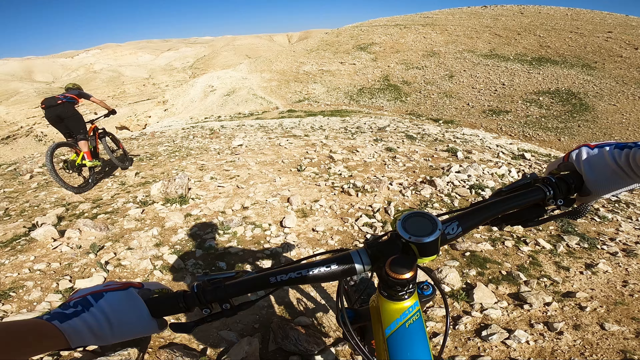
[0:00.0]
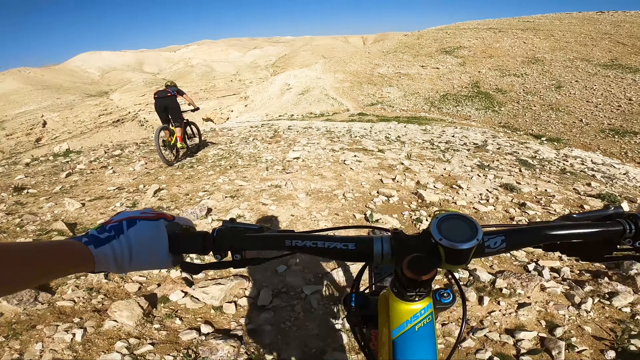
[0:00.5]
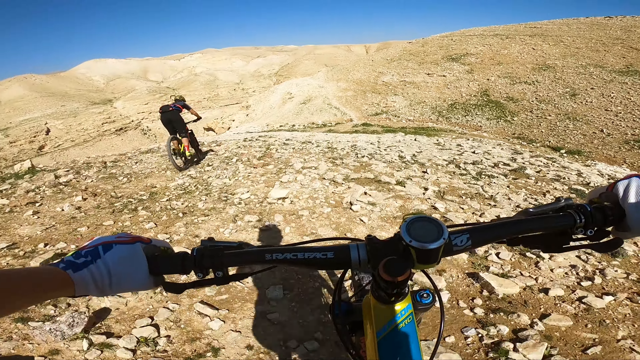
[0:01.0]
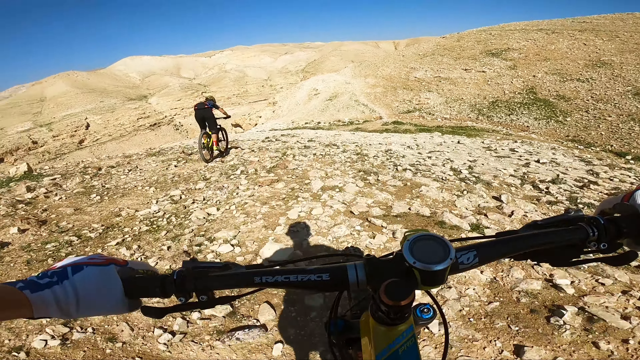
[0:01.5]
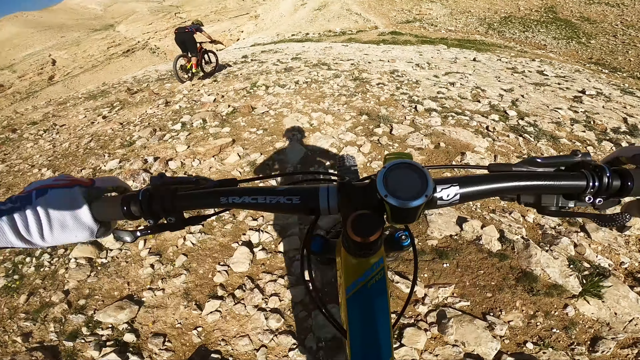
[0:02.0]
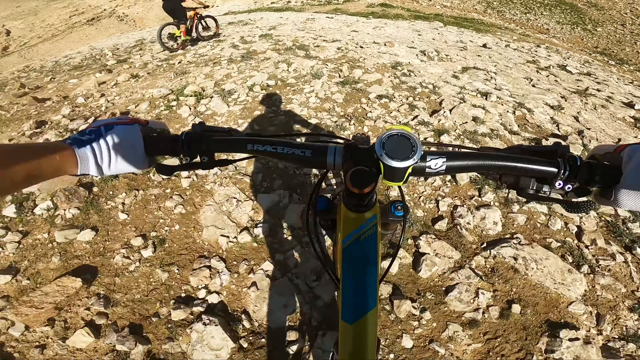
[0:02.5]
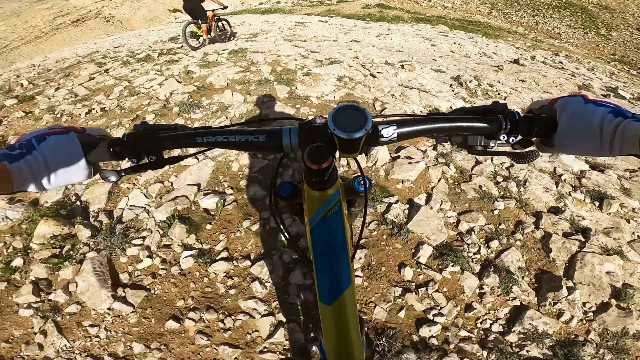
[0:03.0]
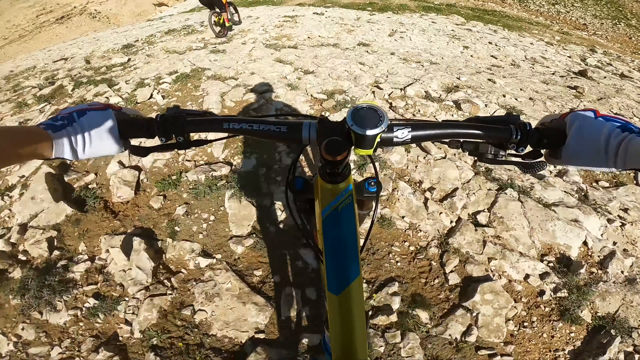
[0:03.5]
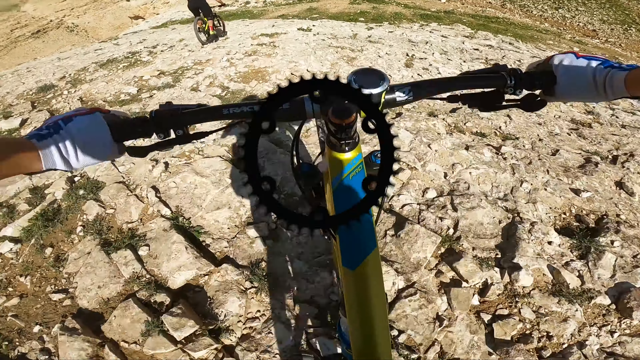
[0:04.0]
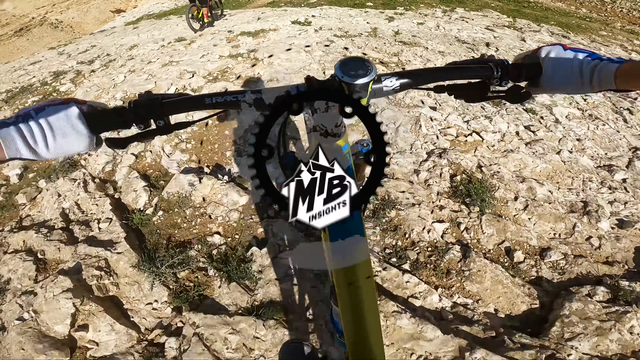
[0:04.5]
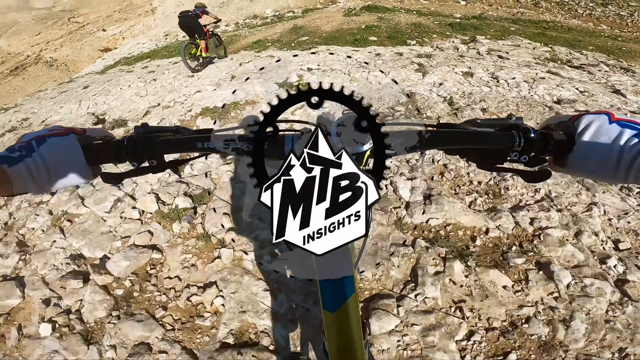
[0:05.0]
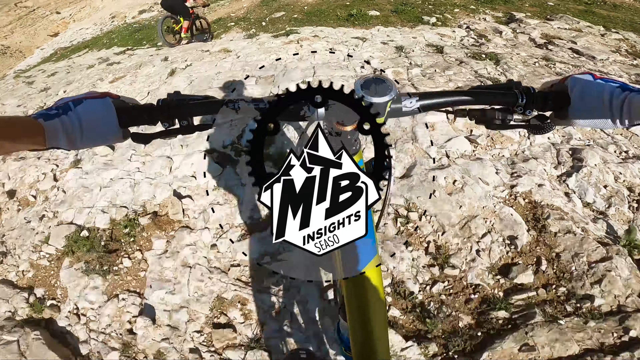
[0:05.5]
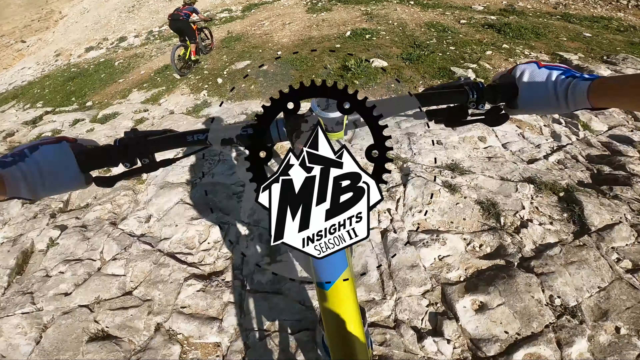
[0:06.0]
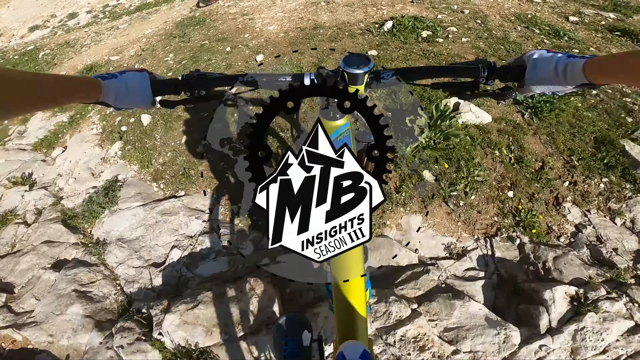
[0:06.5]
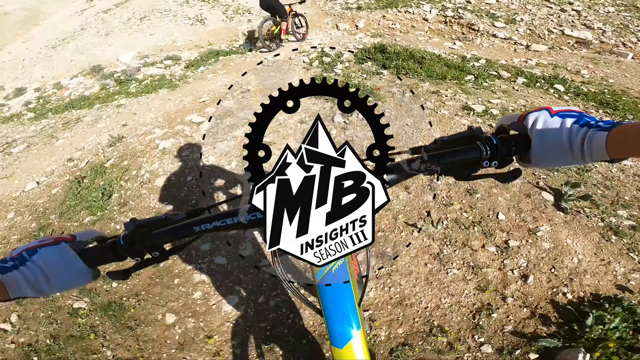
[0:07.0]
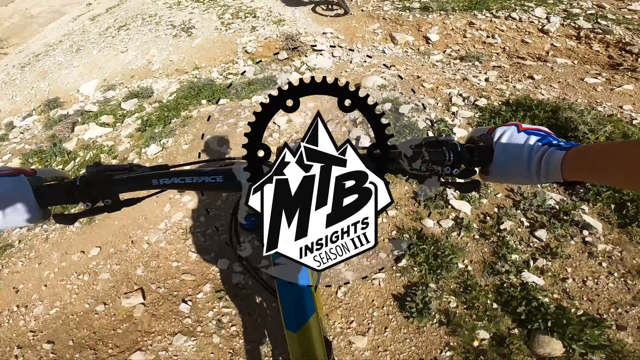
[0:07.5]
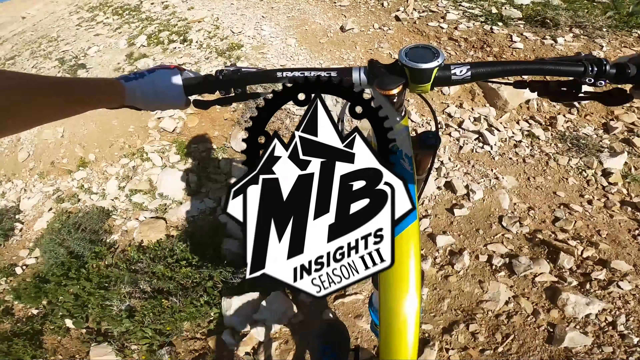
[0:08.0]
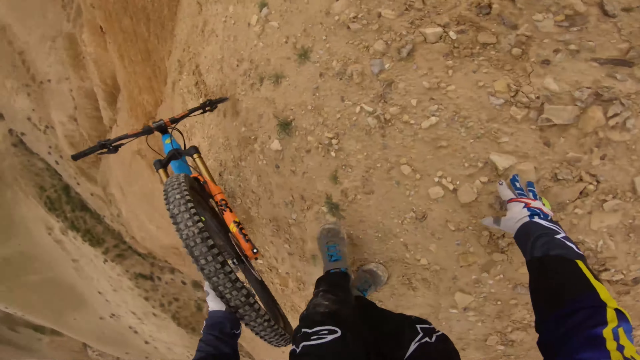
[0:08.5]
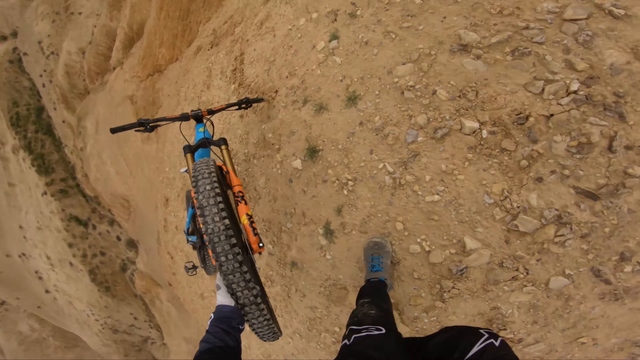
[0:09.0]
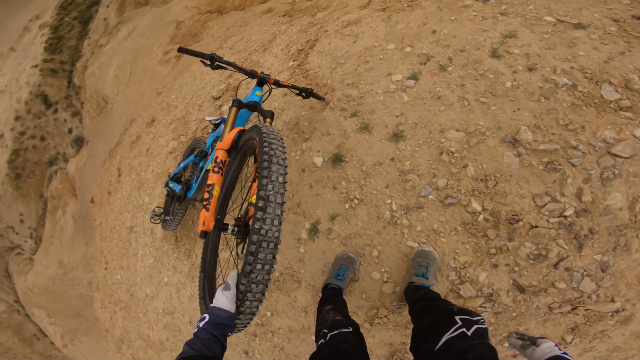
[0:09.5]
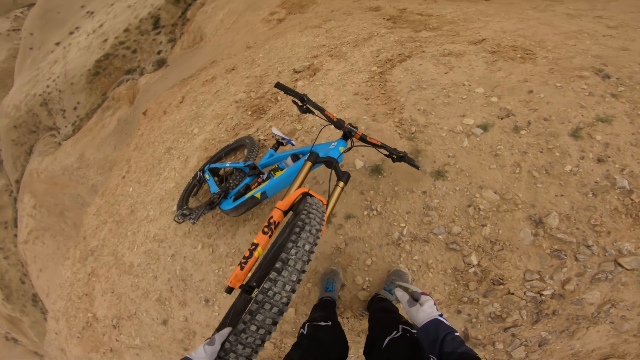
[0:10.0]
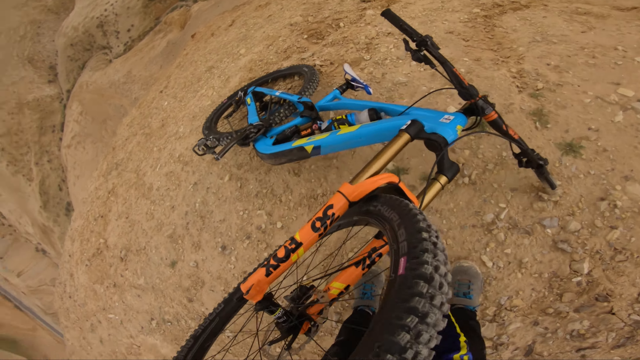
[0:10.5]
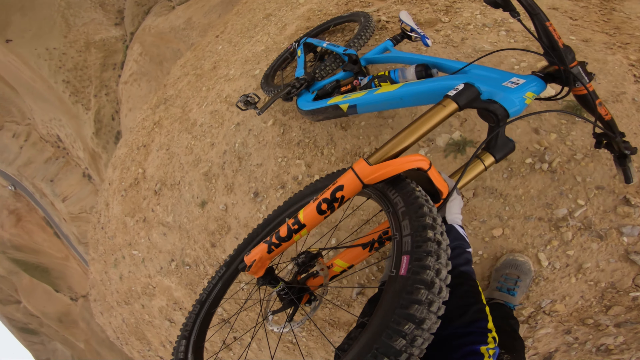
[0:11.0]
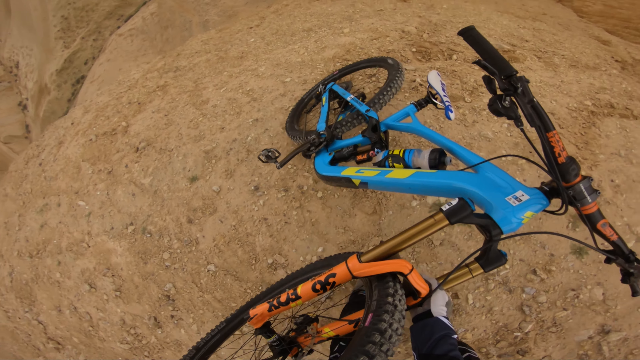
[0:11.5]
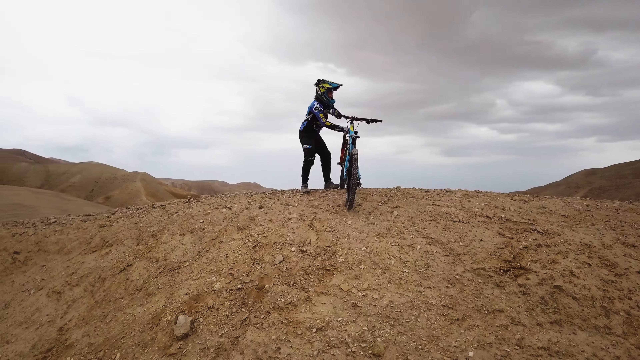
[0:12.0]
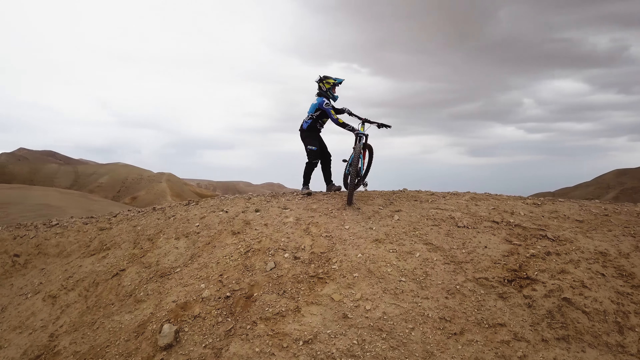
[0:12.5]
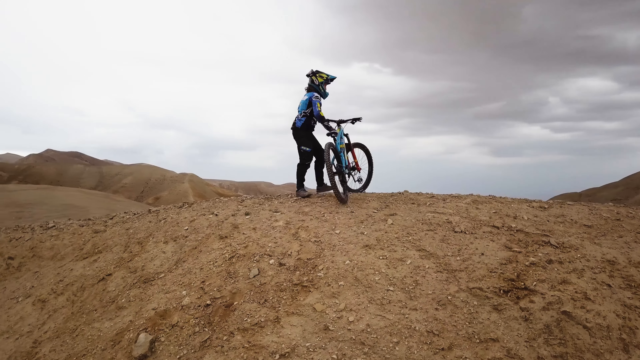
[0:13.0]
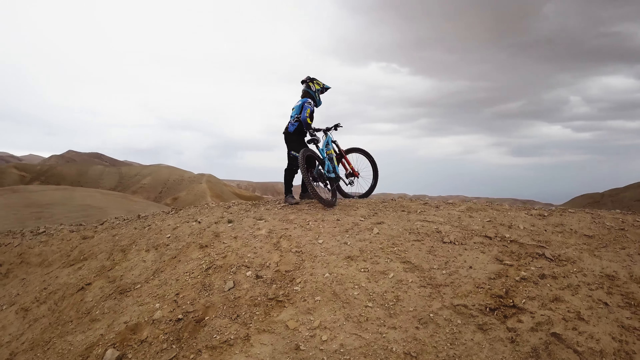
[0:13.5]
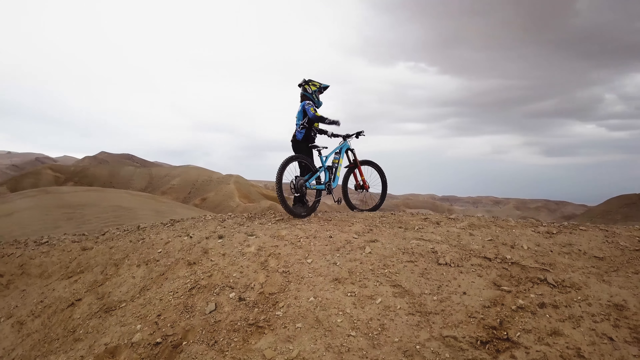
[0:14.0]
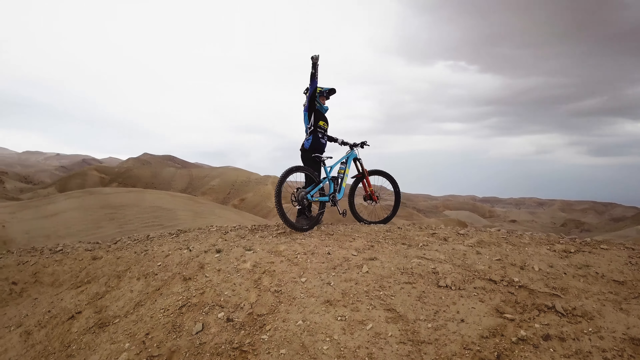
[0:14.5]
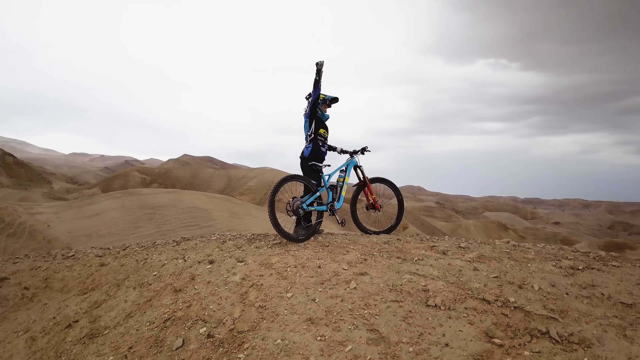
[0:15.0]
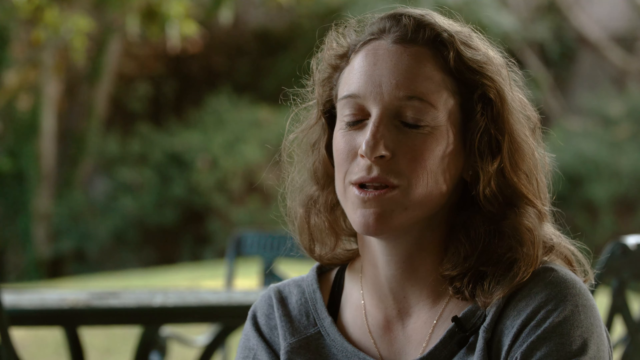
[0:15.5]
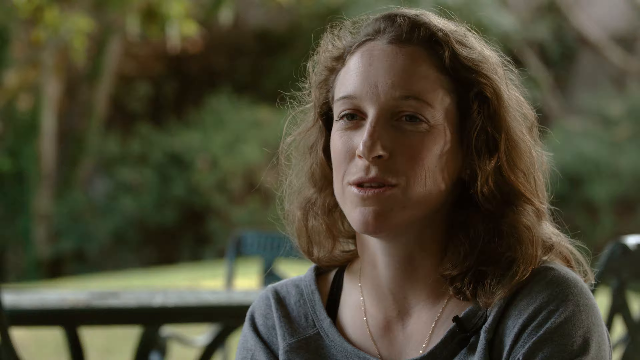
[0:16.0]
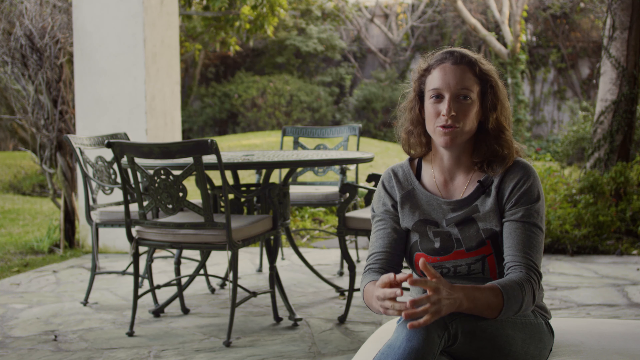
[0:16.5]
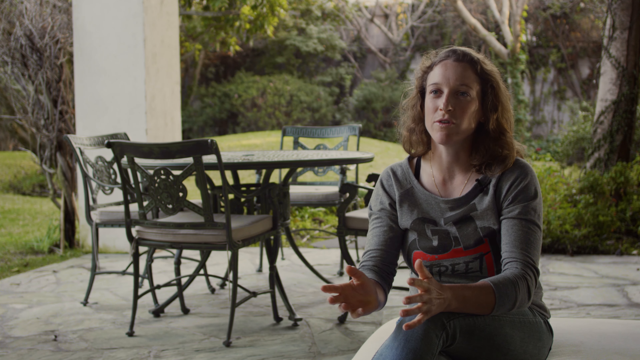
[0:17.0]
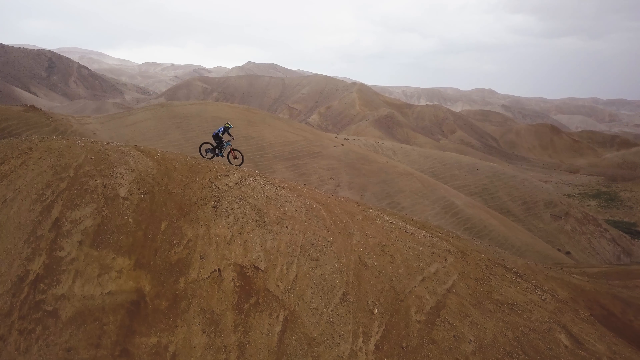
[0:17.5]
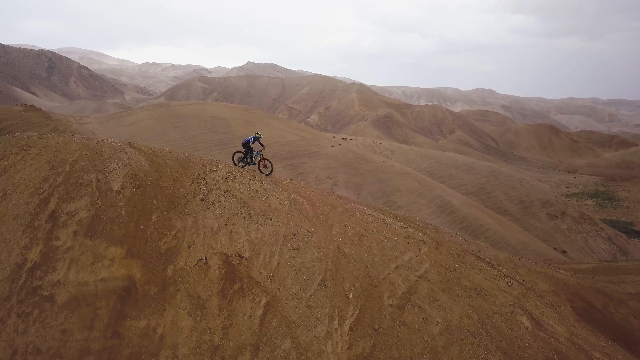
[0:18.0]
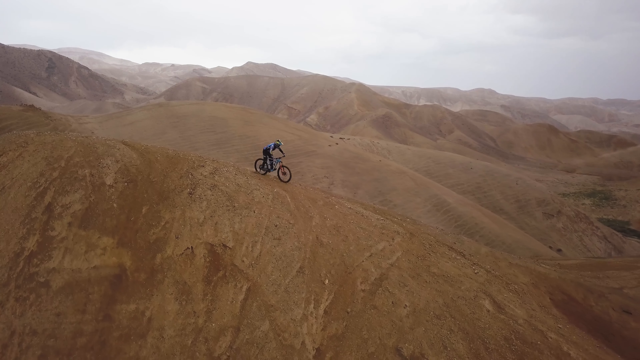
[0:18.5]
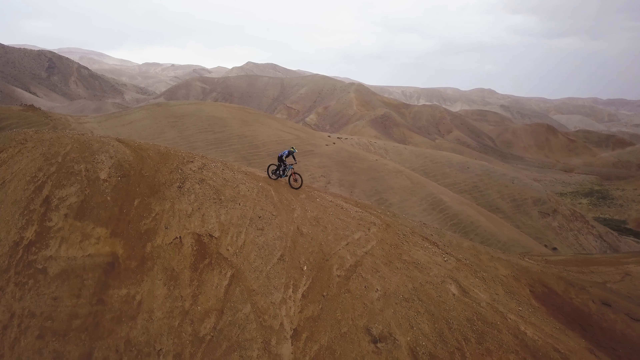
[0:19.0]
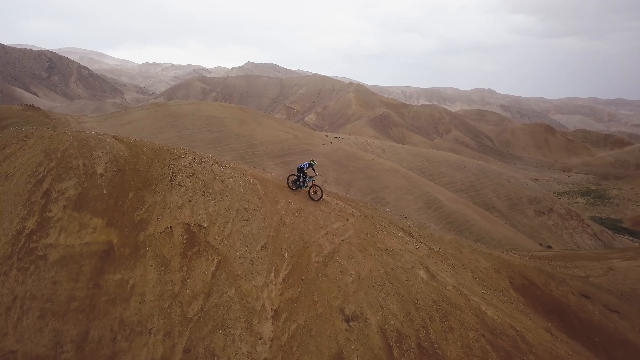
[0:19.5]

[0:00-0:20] The video opens from a first-person perspective of someone riding a dirt bike through a hilly, rocky area of sort of light brown dirt. There is no path; the entire area is dirt. The handlebars run horizontally from left to right across the screen, with some kind of dial in the center, and two gloved hands grip the handlebars on either side. The shadow of a person riding a bike is visible ahead, showing a helmet and then the body. For a moment, a little of the bike's bar is visible, striped yellow and blue. Another rider is out in front to the left, maybe 15 yards ahead, riding a dirt bike hunched over and wearing a helmet, and the camera seems to be gaining ground on them. A spinning logo appears: a black gear shift with ridges around it, with a sketch of a mountain at the bottom, all in black and white. Black text reads "MTB Insights Season" followed by the Roman numeral three. The ride is very rocky and the view bounces around a lot. Suddenly there is apparently a crash, as the video cuts immediately to a different view: the dirt below, and the bike lying in the dirt to the left, appearing vertical, sort of upright, because the view is at some kind of twisted 90-degree angle. A person's feet and pant legs in black pants are in the lower right, and hands reach up and pull the bike out of the dirt. A third-person view shows a bicyclist wearing a helmet on top of a dirt hill with a bike to their right; the person raises their right arm in triumph. A brief snippet shows a young woman being interviewed on a patio, and then a third-person view shows the person riding down the hilltop.